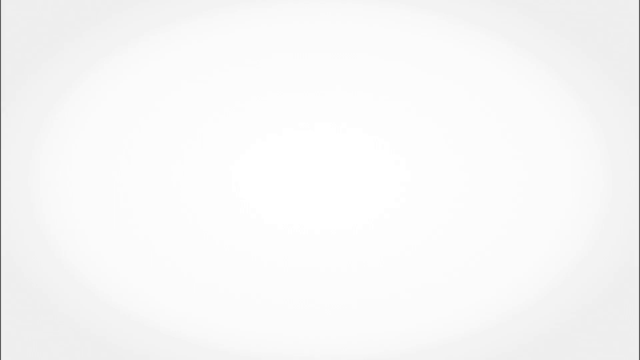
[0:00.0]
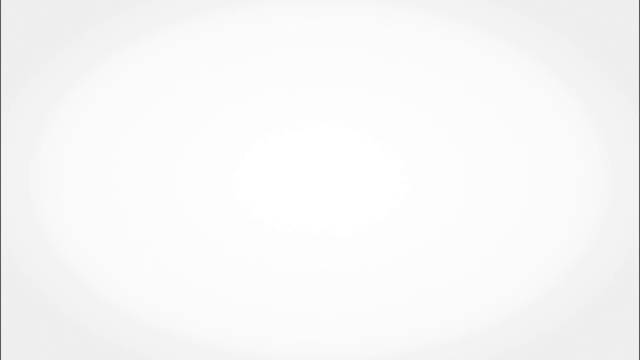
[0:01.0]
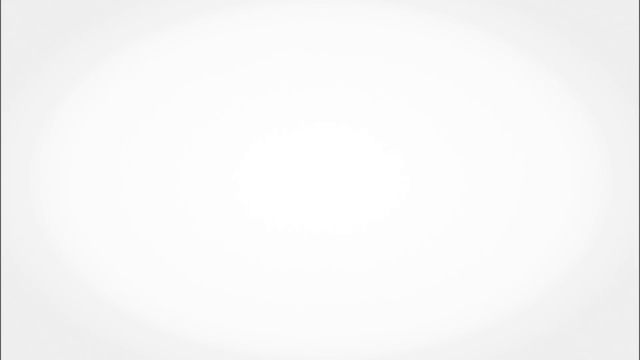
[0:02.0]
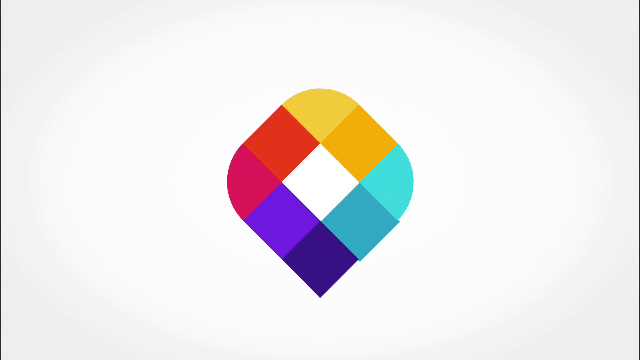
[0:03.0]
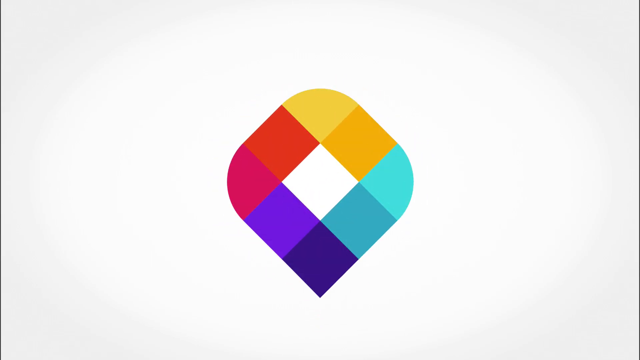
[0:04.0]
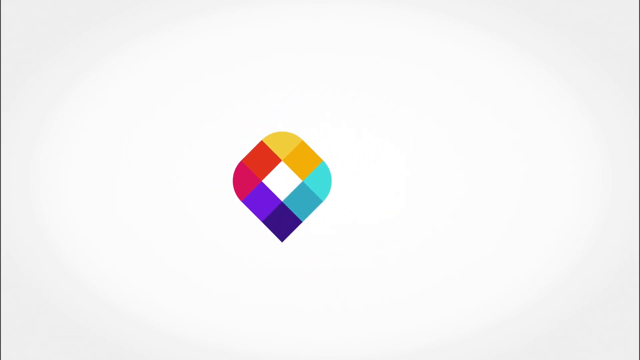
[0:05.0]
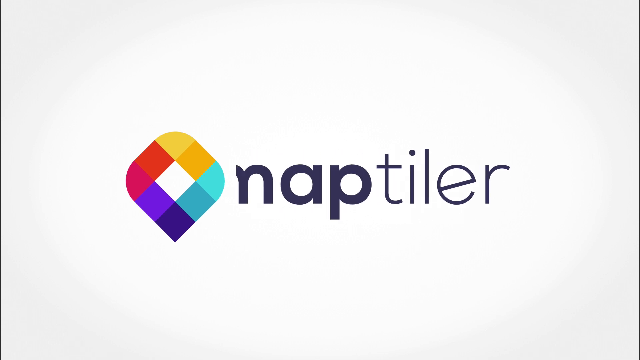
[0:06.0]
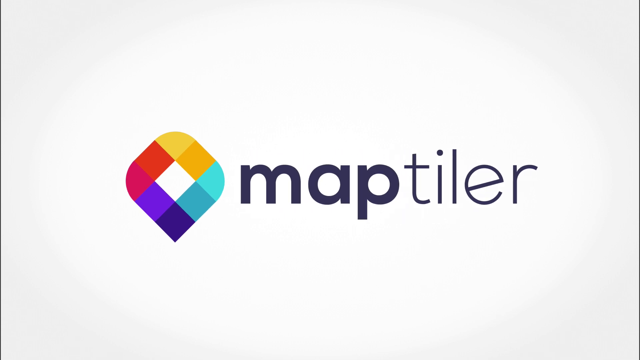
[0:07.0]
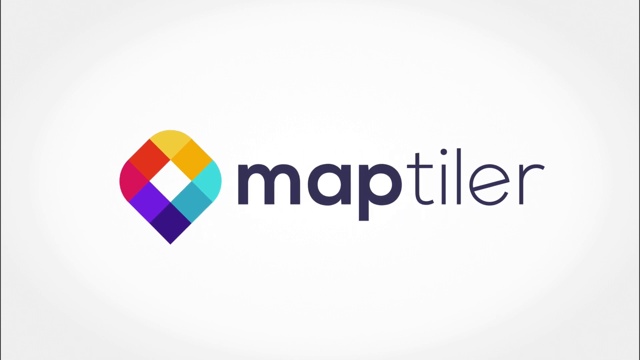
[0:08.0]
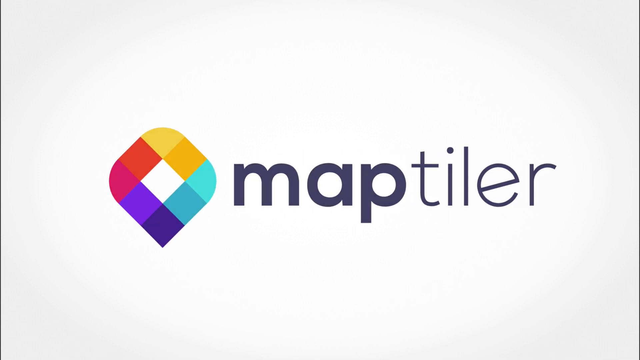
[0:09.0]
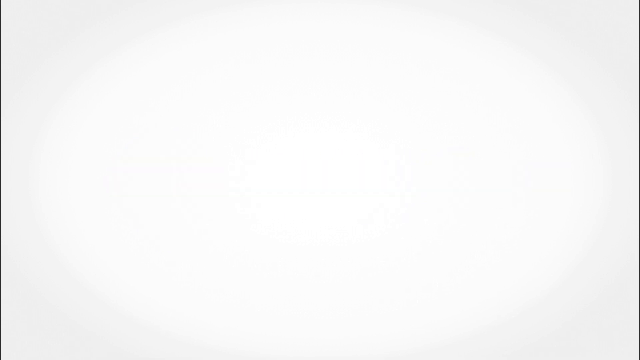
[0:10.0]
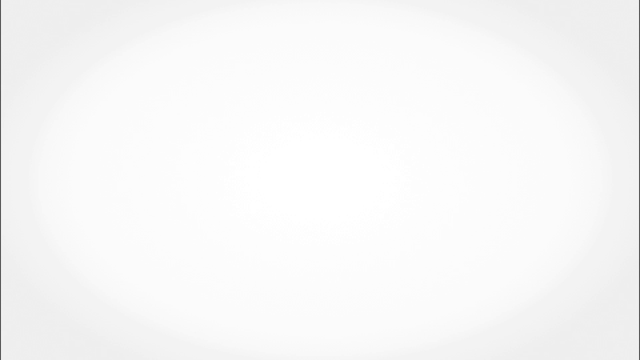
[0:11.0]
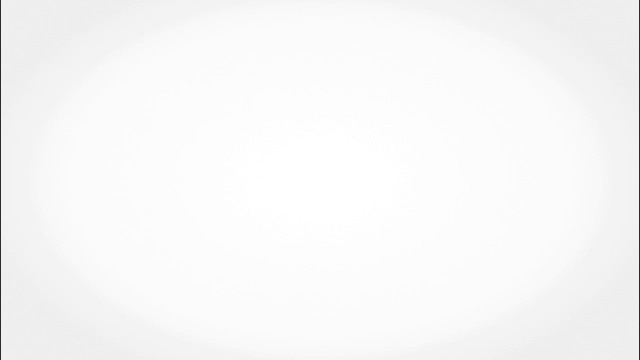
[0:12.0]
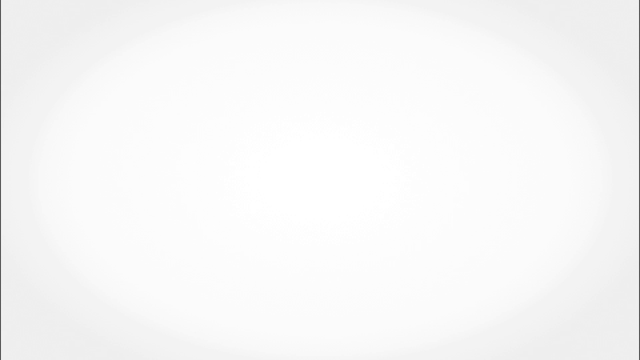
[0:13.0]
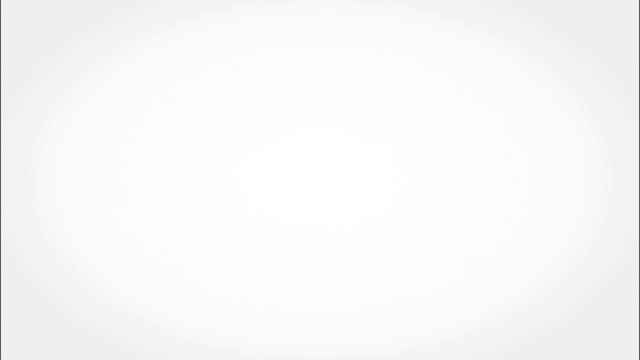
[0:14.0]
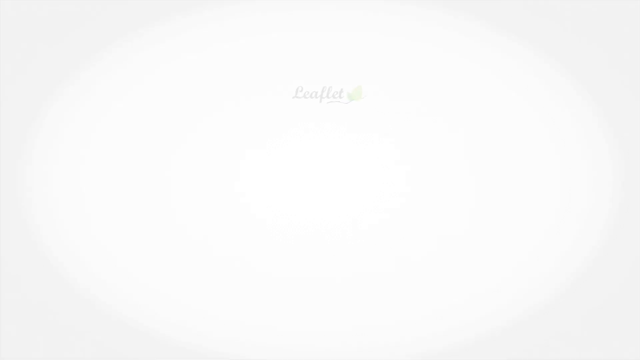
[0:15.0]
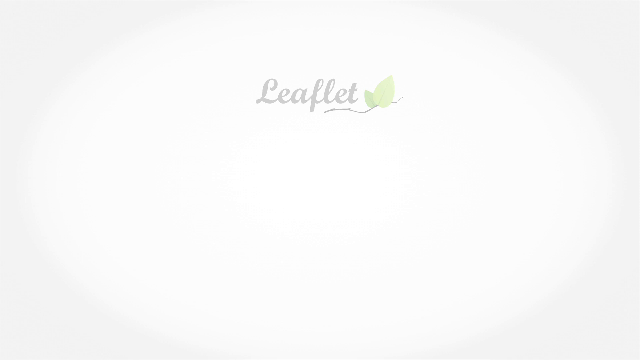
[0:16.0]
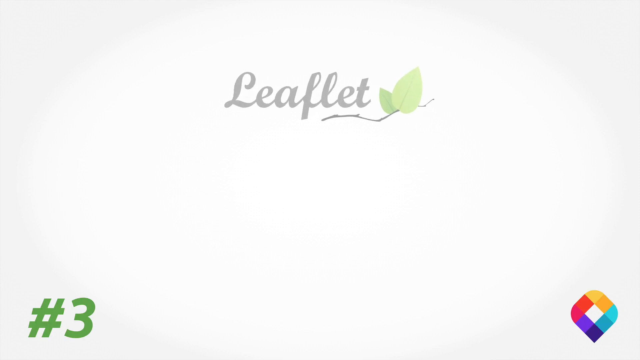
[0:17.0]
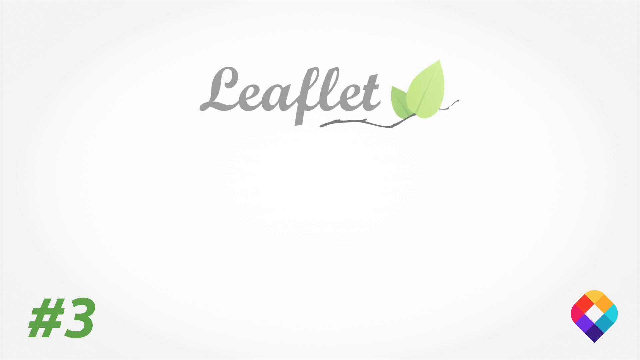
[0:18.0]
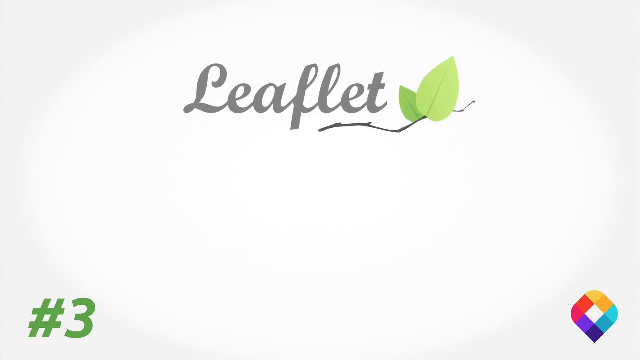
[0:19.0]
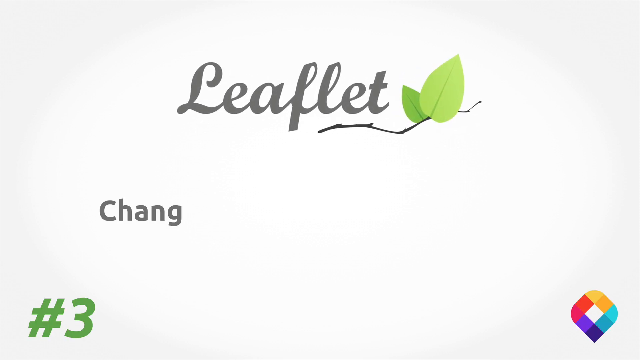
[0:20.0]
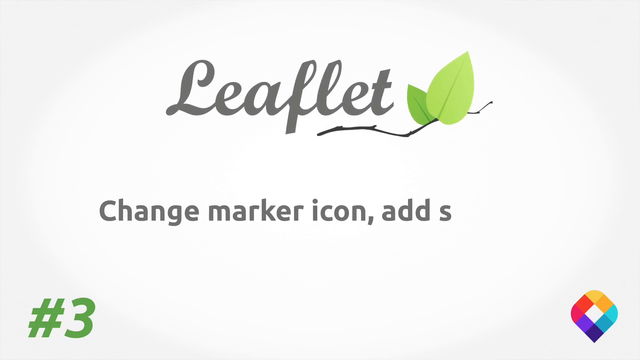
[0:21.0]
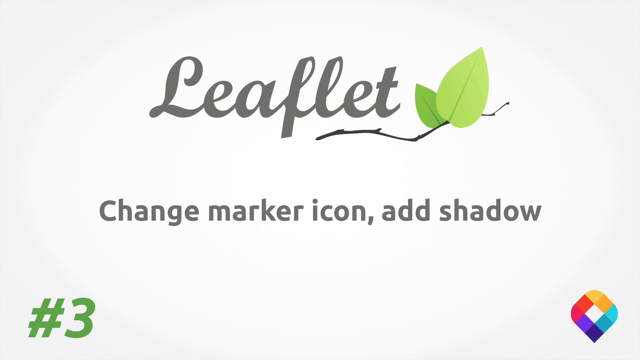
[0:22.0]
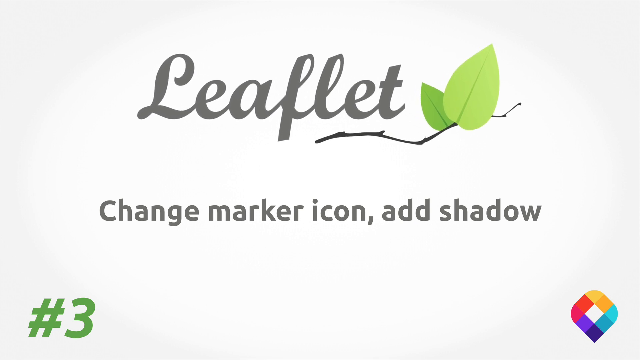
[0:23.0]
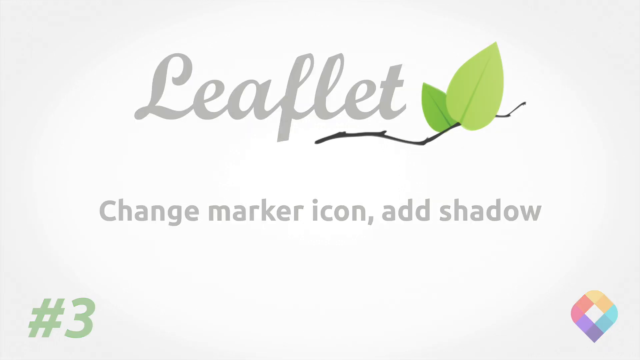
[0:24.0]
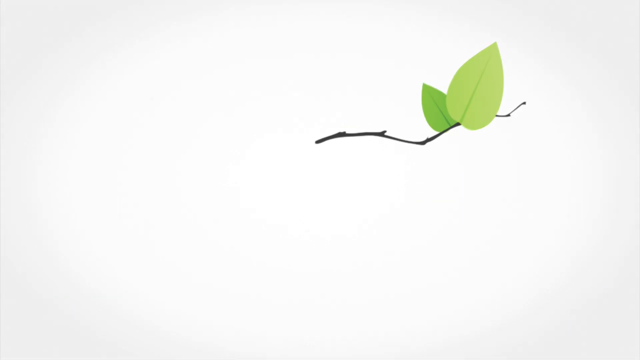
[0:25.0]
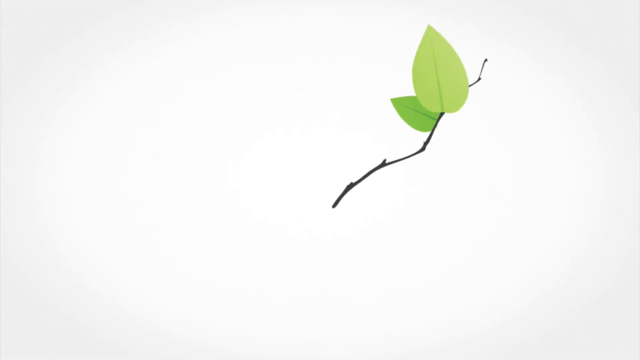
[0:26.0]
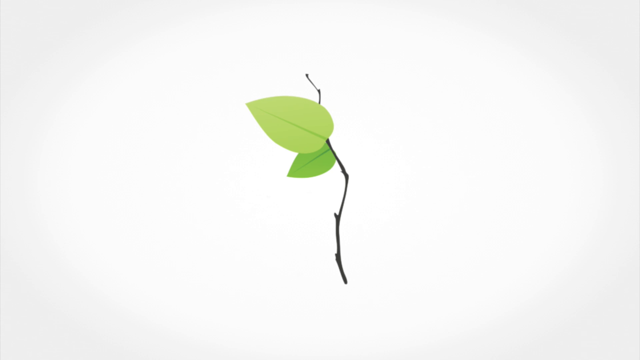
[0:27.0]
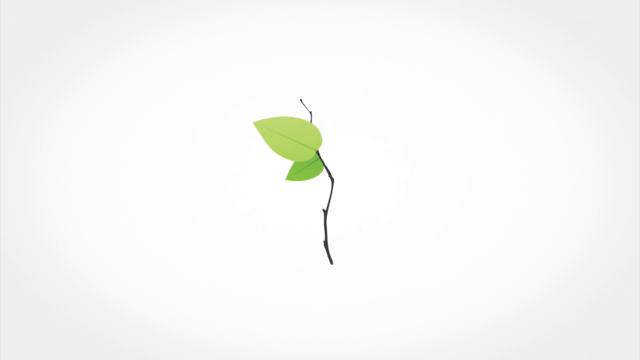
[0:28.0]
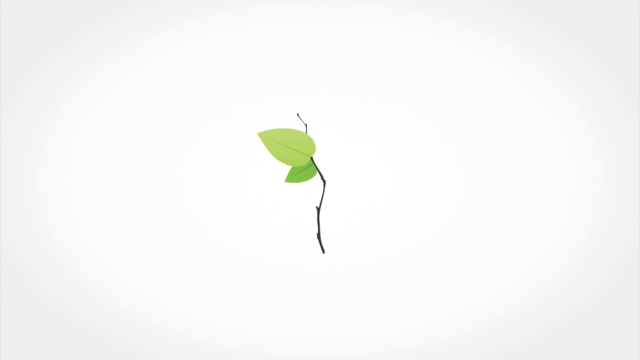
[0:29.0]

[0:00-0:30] The video opens on a white screen, and a logo appears made of many tiles, each a different color, which together form a shape almost like an upside-down raindrop: it comes to a point at the bottom and has rounded edges along the sides and top. The text "map Tyler" appears on the right-hand side. The screen then goes white, and "leaflet" appears at the top with a branch bearing two leaves. The same tiled logo is in the bottom right-hand corner, the number three is in the bottom left-hand corner, and the text "change marker icon, add shadow" appears. Everything then disappears except the branch with the two leaves, which turns from lying horizontally to standing upright and vertical with the leaves at the top, and then it goes away.